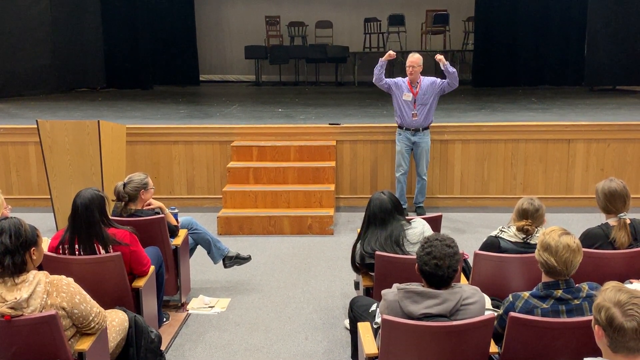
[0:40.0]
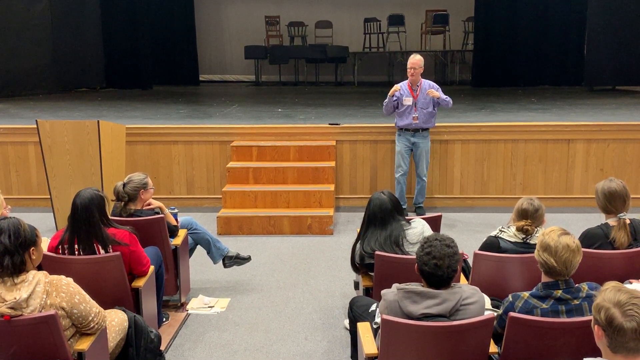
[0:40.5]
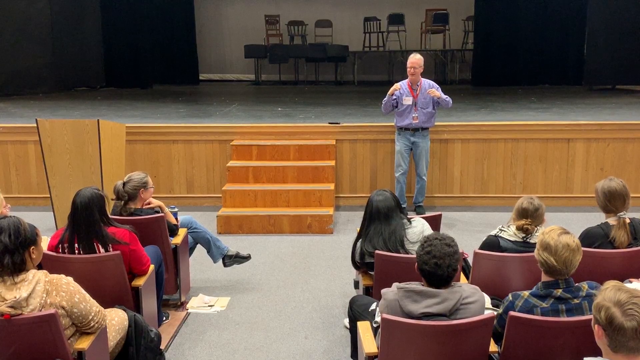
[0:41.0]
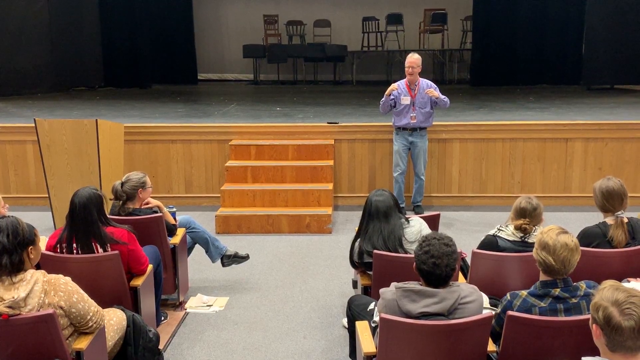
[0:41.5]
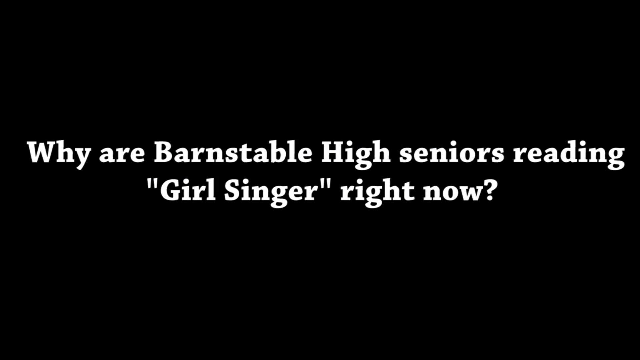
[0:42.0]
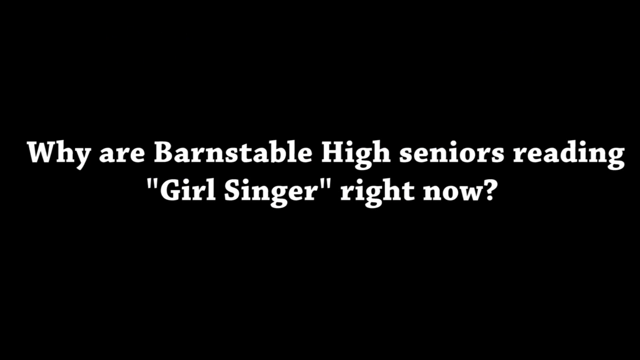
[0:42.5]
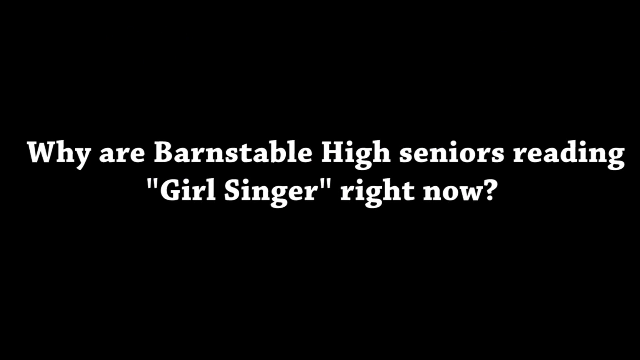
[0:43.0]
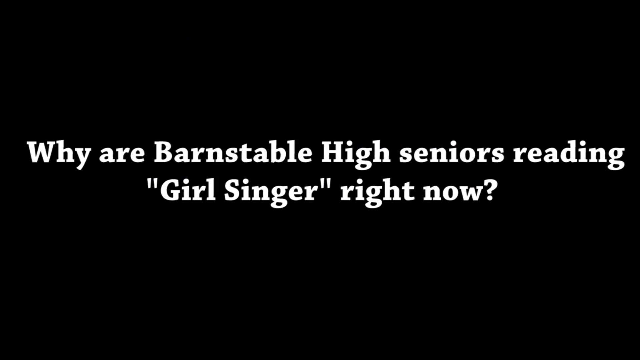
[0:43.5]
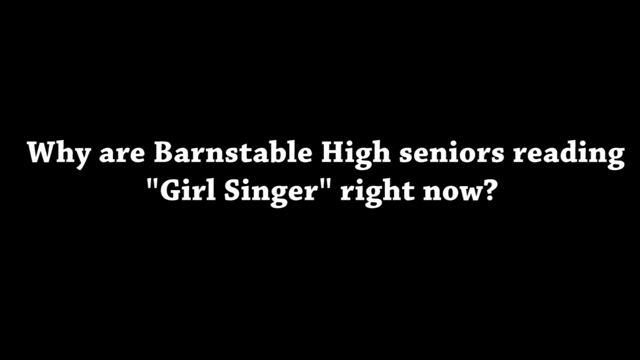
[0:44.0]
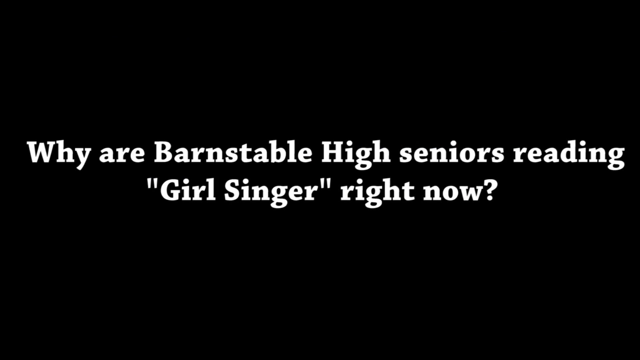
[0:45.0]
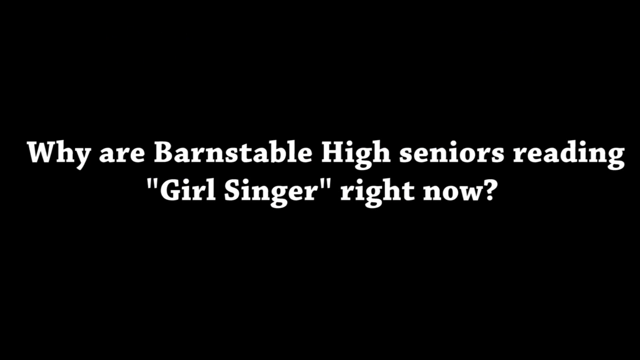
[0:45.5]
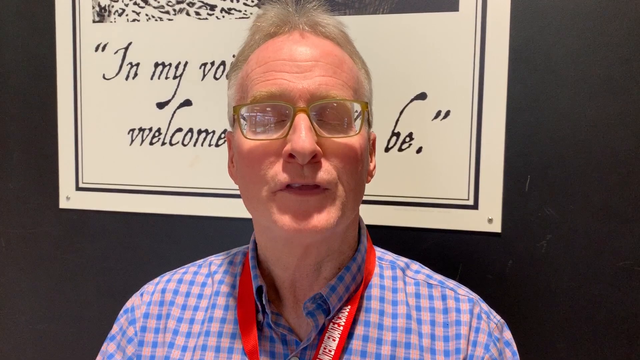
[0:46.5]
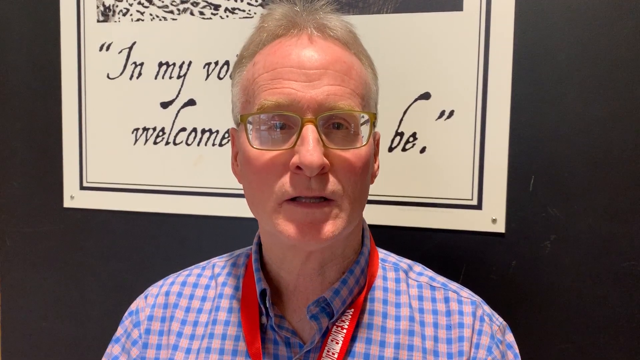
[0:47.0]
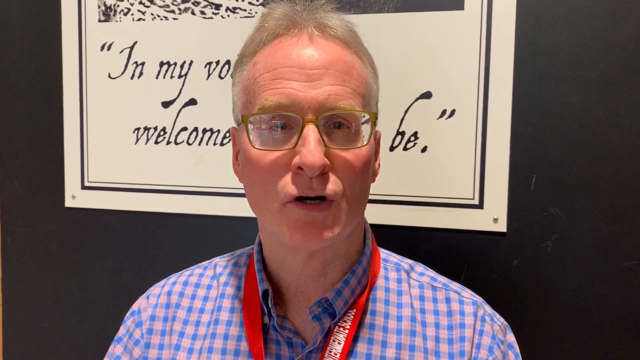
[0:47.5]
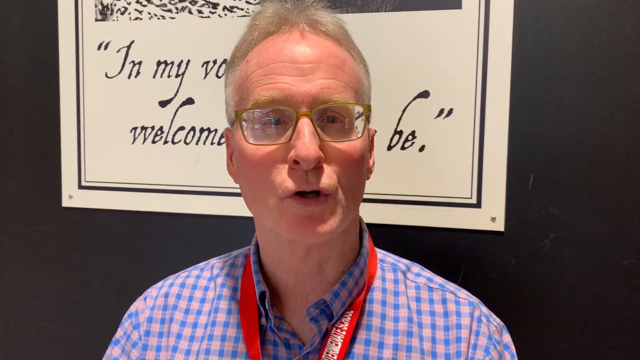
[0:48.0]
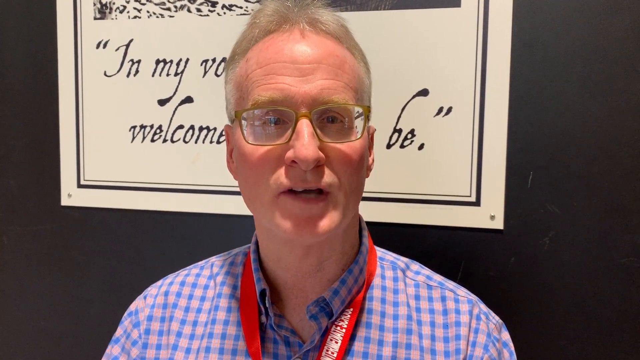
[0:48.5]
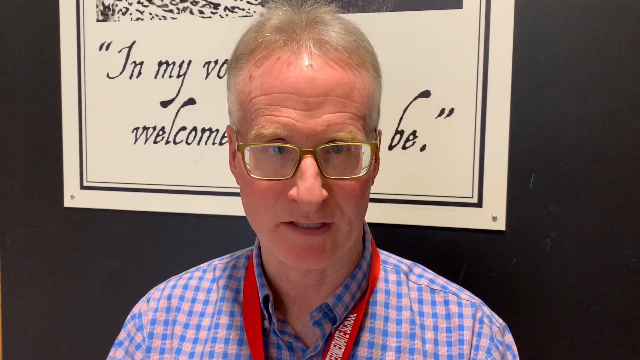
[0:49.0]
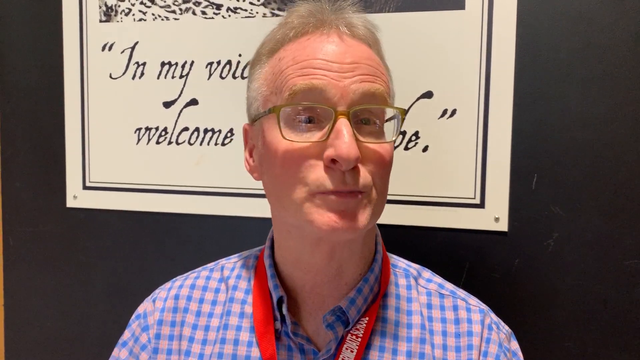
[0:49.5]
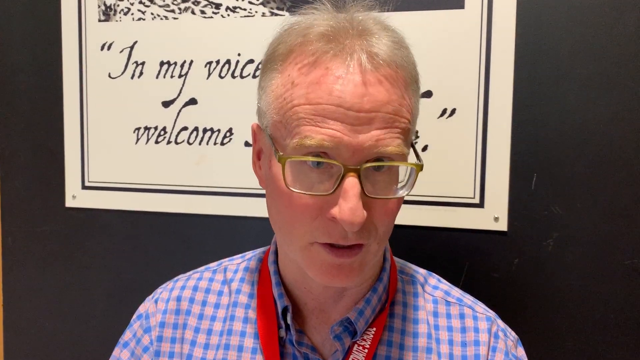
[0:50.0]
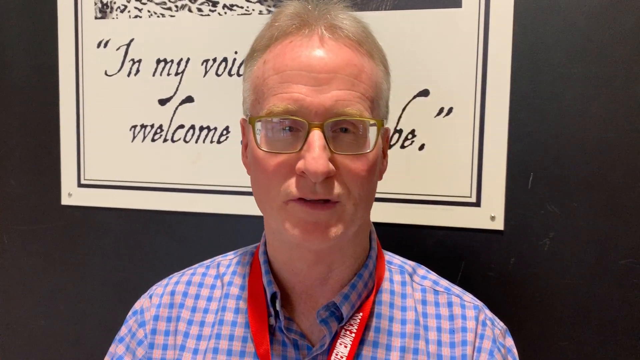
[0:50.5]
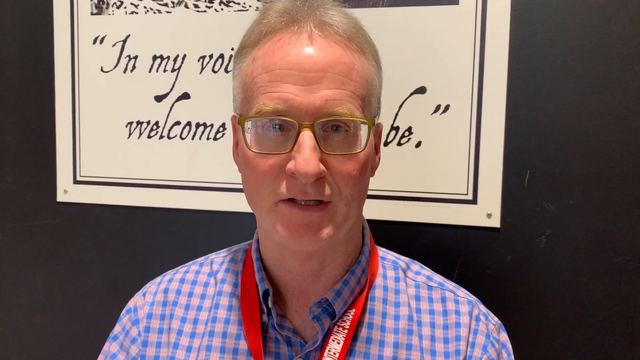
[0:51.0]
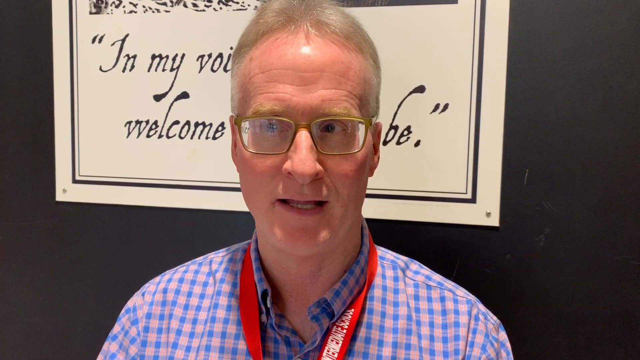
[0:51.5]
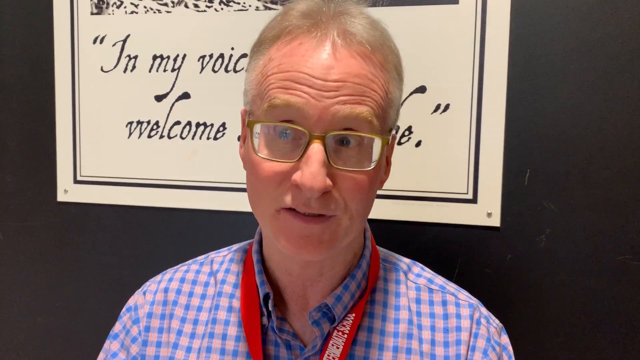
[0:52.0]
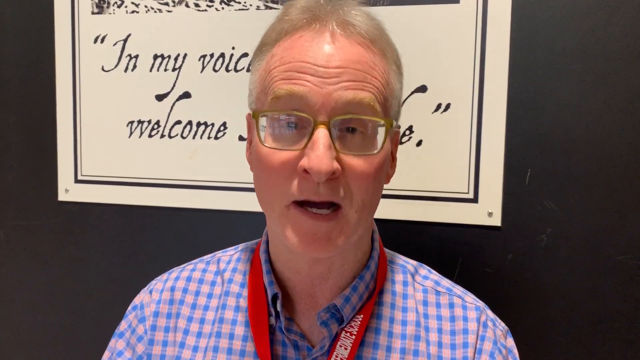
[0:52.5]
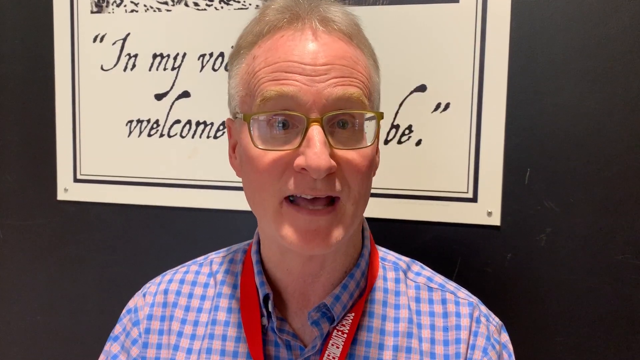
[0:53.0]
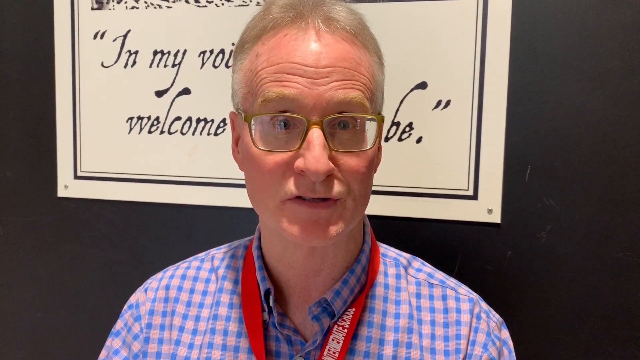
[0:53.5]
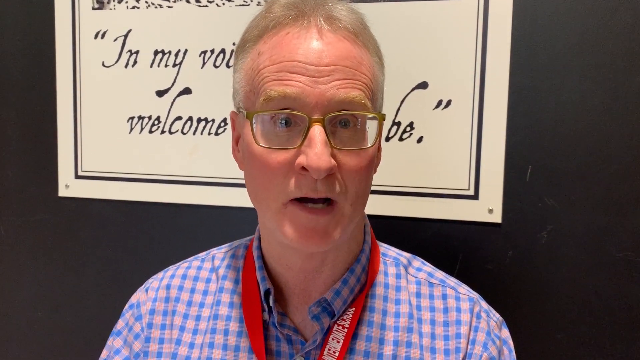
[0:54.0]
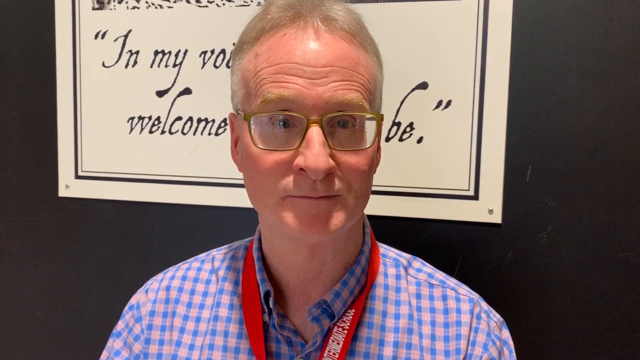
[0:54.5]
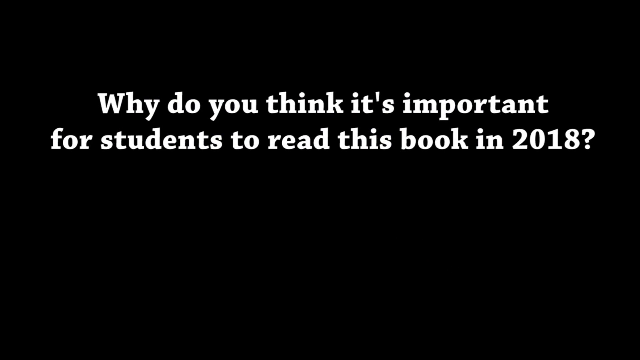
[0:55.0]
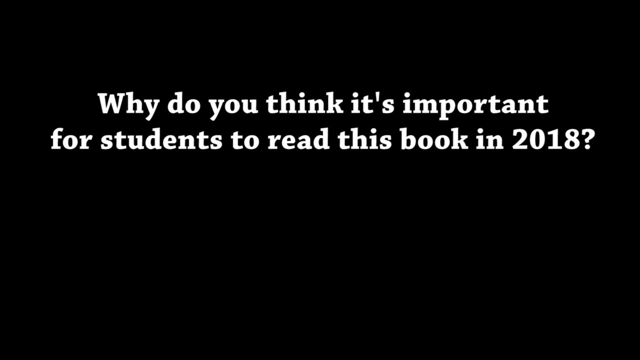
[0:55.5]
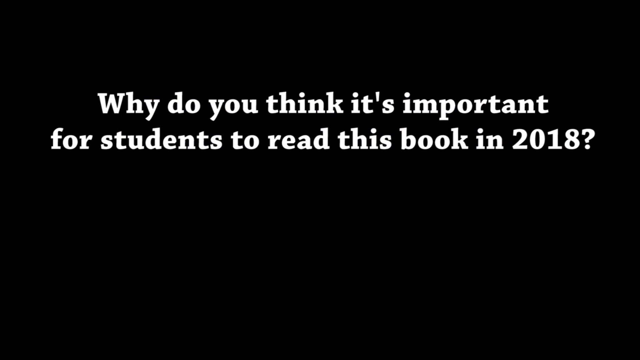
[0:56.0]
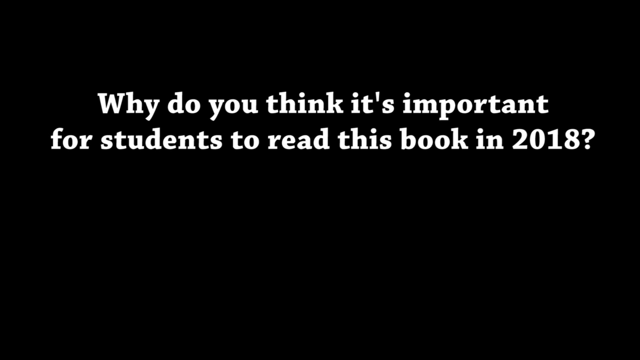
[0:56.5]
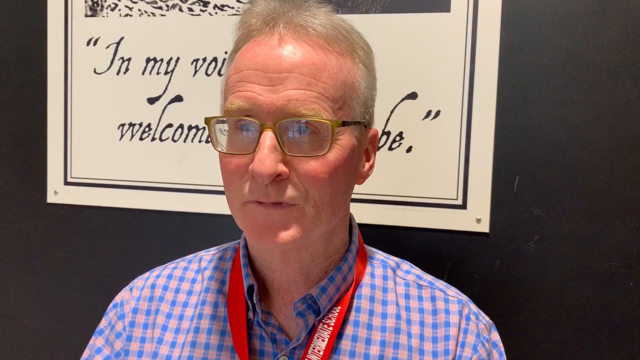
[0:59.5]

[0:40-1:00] A man lectures in a lecture hall to a bunch of students, possibly high school students. Text on a black background in white letters says "why are Barnstable High School seniors reading Girl Singer right now?", suggesting a high school auditorium. The video cuts back to the man, who seems to be answering the question. Next the text says "why do you think it's important to read this book in 2018?" and he answers, then the video cuts back to the shot of him talking with his hands. The dress the spinning girl on the book's image wears looks kind of late 1950s or early 1960s.